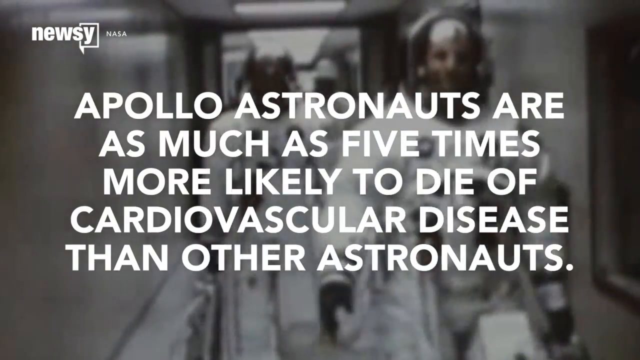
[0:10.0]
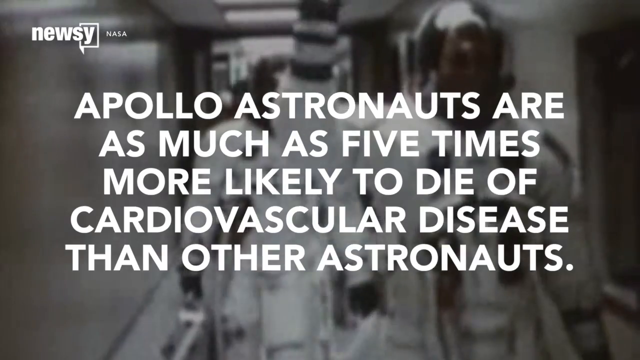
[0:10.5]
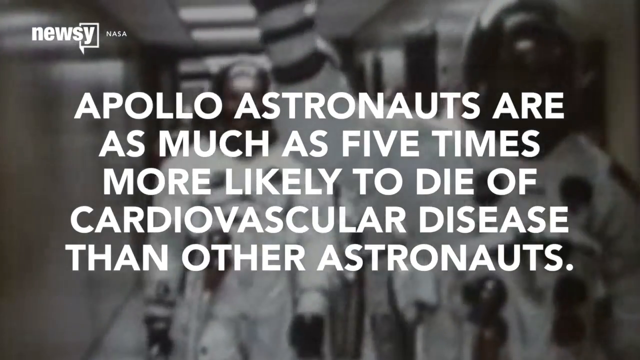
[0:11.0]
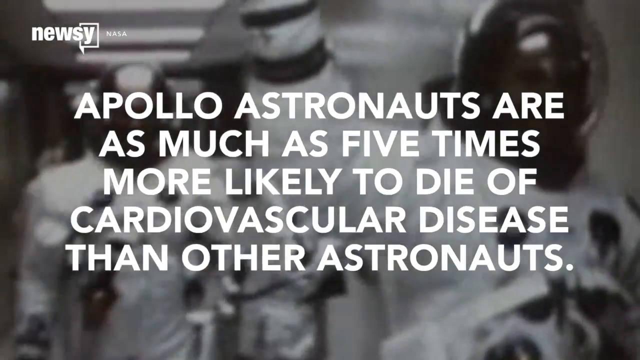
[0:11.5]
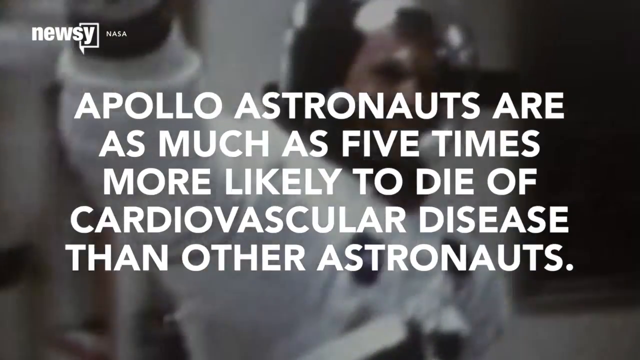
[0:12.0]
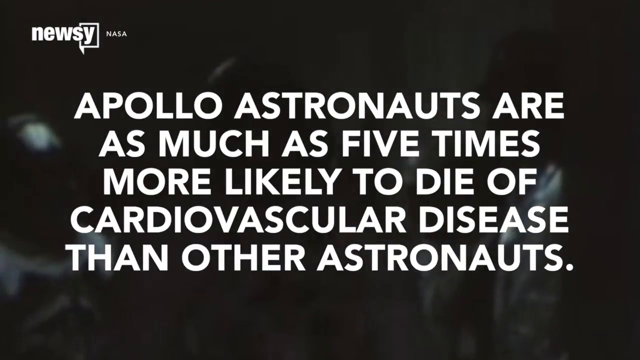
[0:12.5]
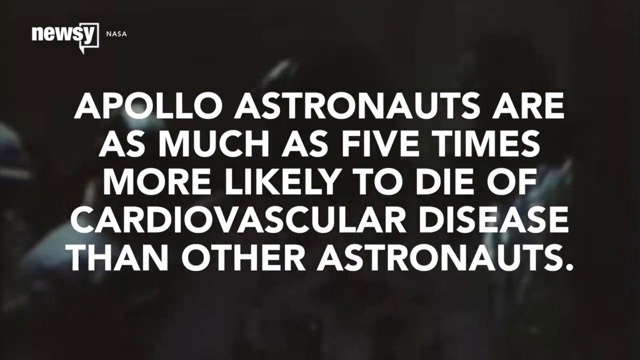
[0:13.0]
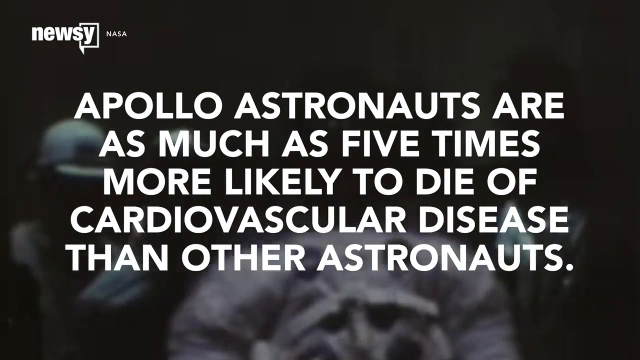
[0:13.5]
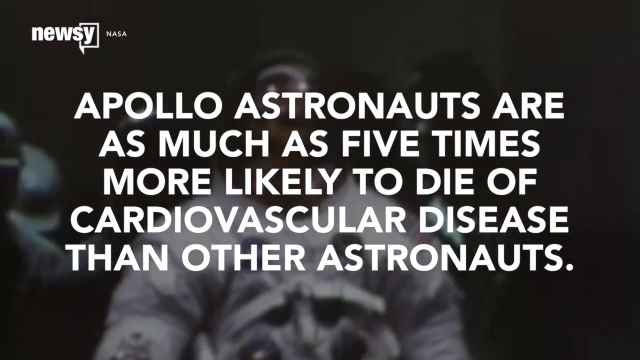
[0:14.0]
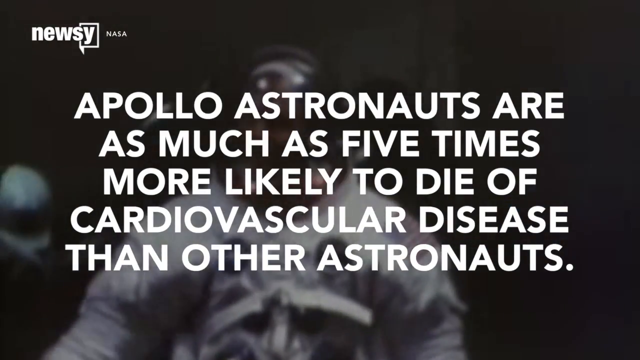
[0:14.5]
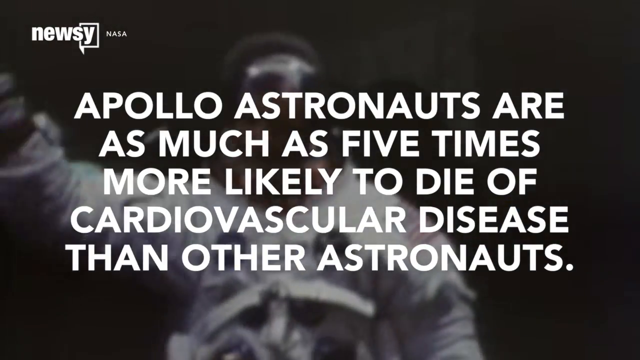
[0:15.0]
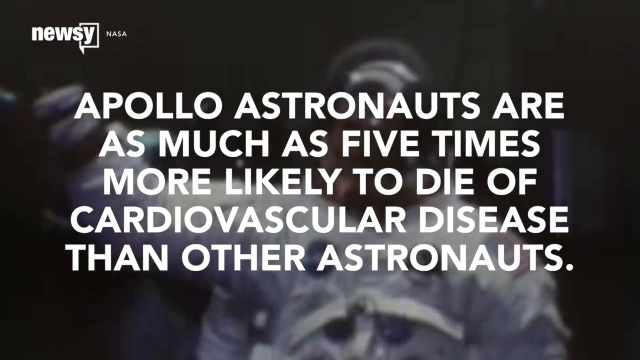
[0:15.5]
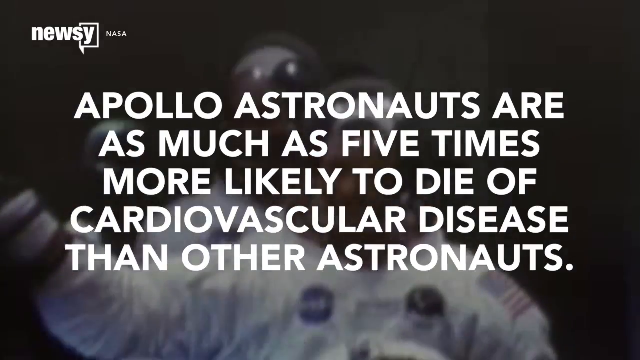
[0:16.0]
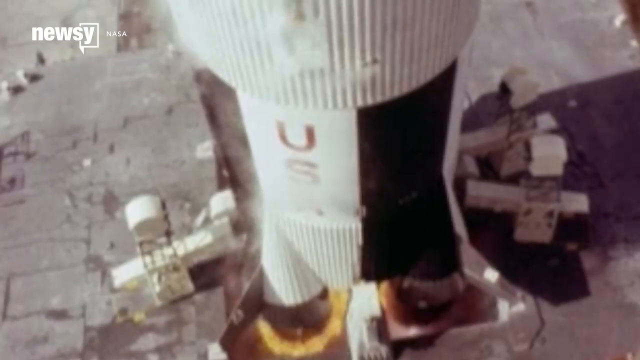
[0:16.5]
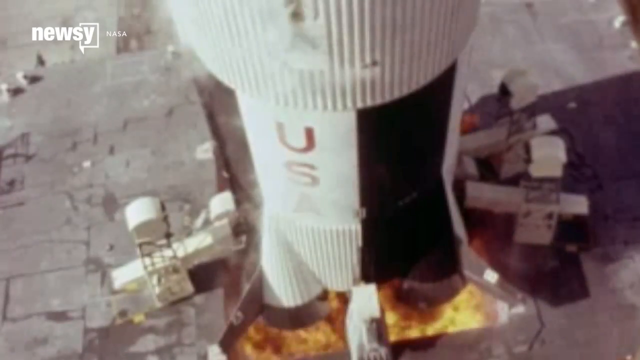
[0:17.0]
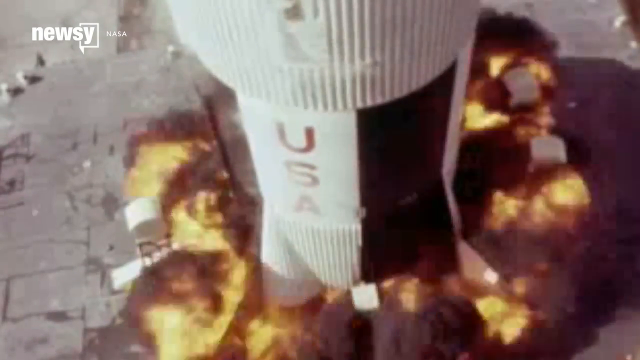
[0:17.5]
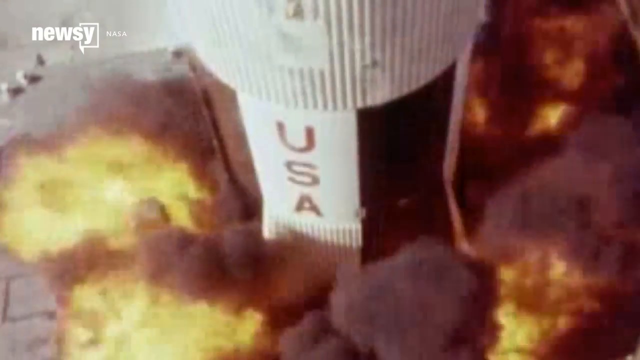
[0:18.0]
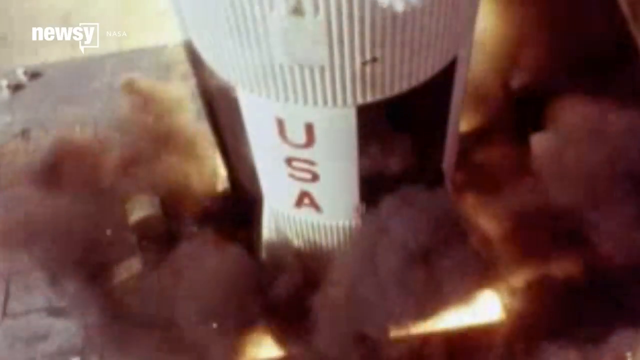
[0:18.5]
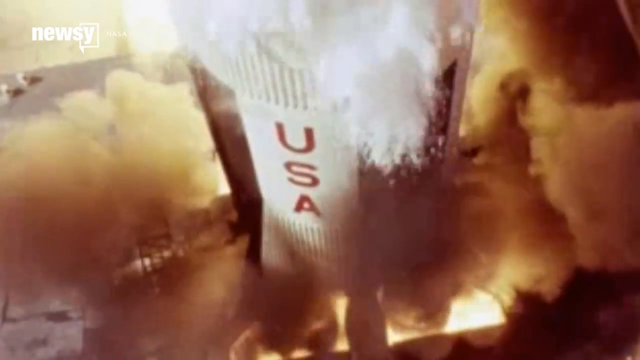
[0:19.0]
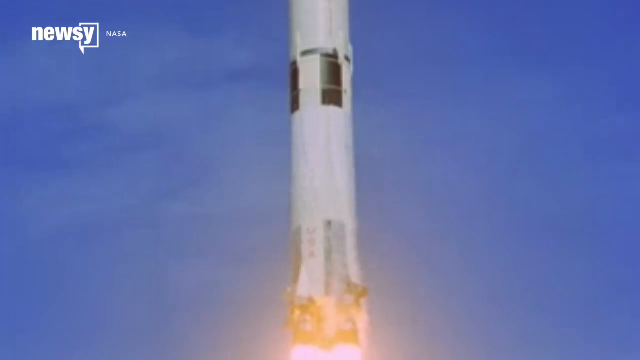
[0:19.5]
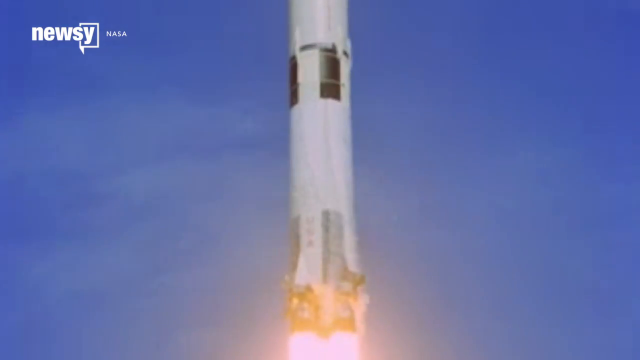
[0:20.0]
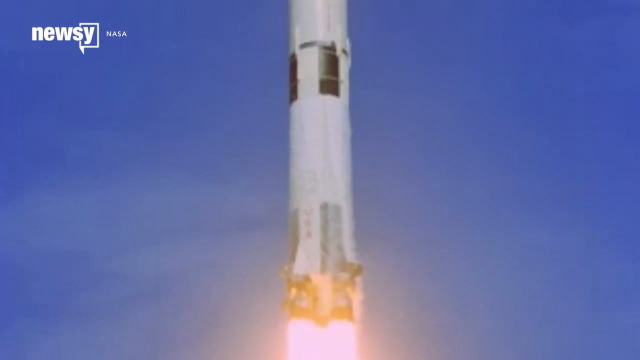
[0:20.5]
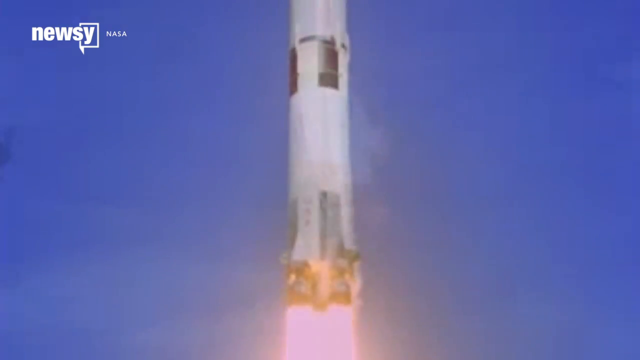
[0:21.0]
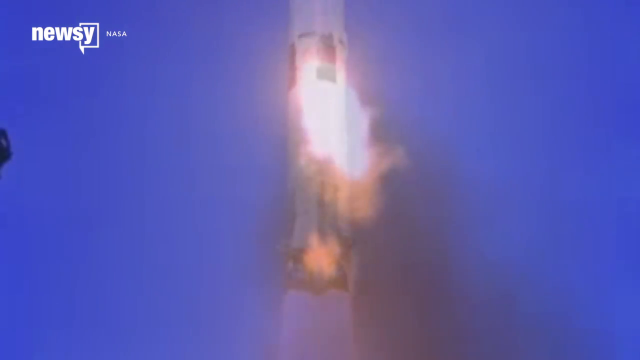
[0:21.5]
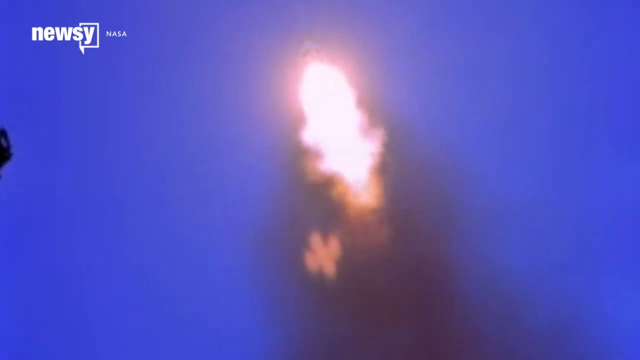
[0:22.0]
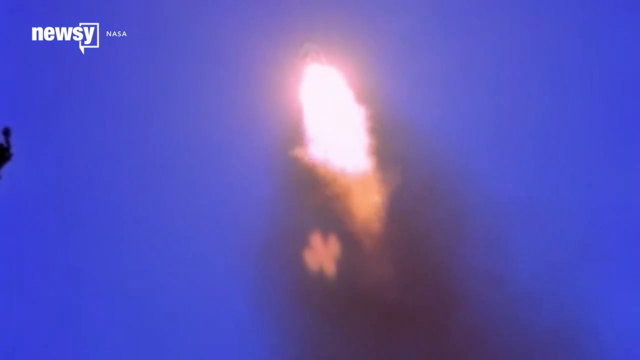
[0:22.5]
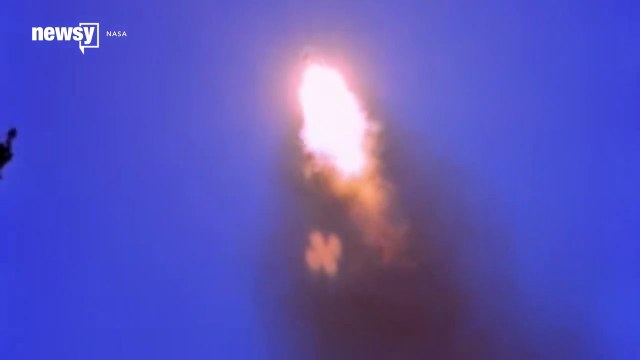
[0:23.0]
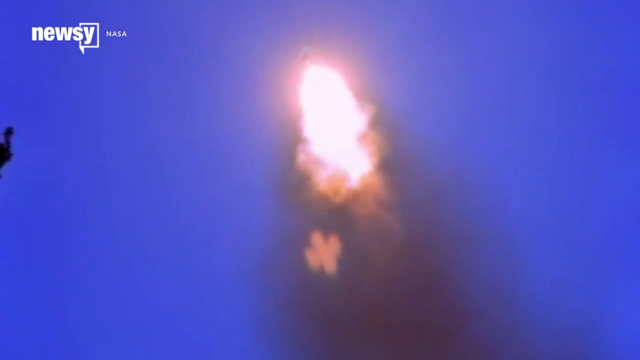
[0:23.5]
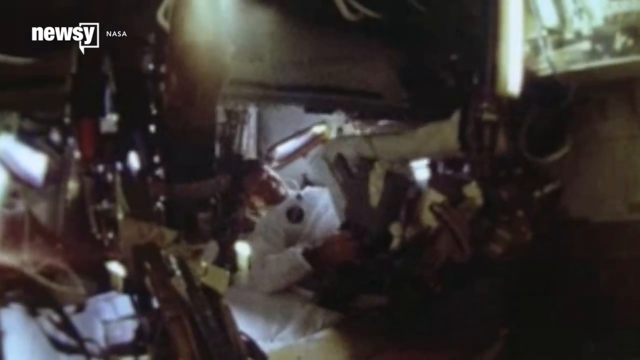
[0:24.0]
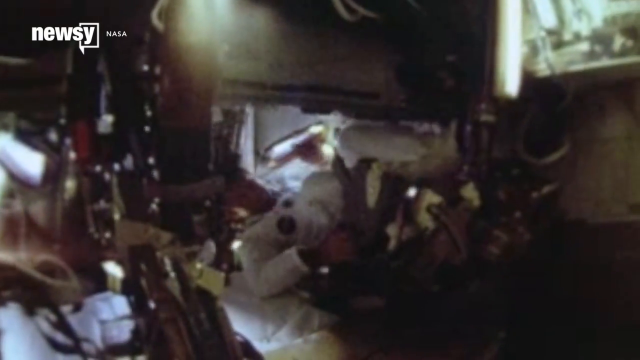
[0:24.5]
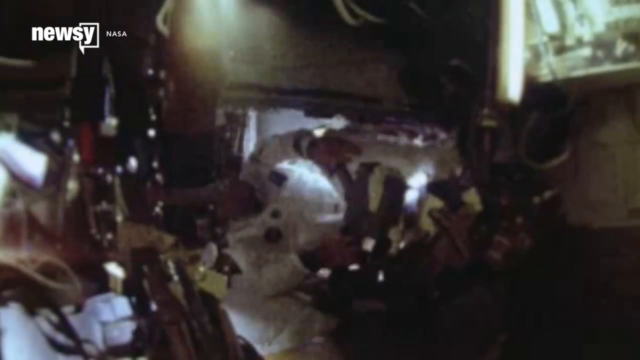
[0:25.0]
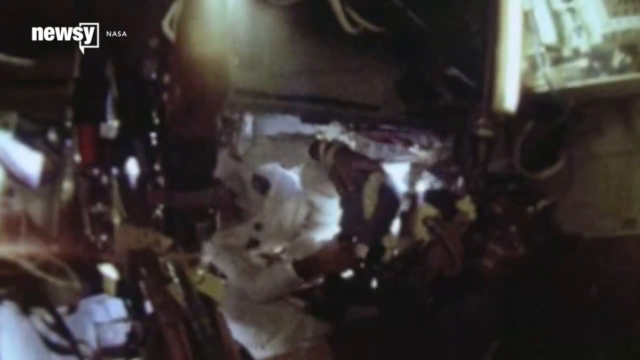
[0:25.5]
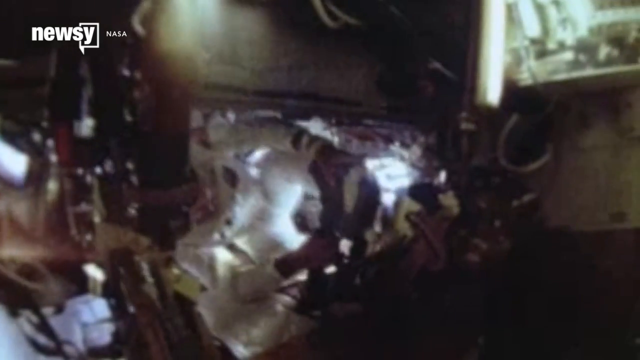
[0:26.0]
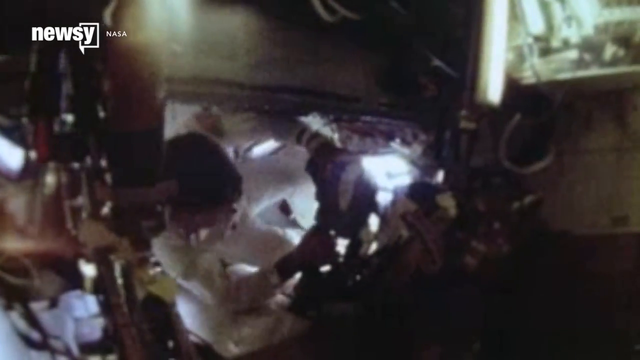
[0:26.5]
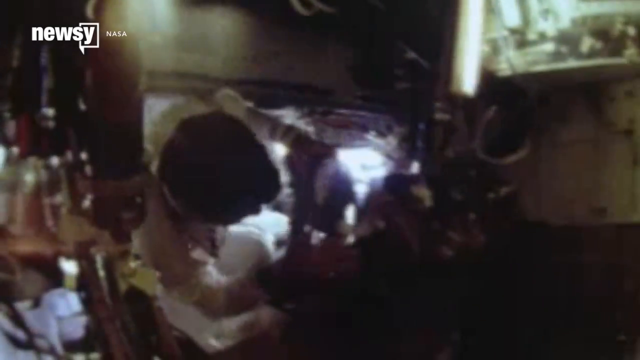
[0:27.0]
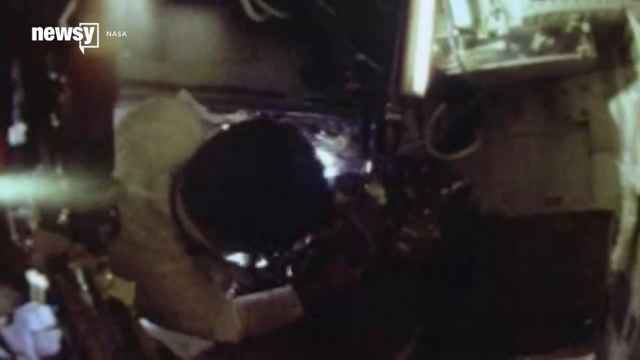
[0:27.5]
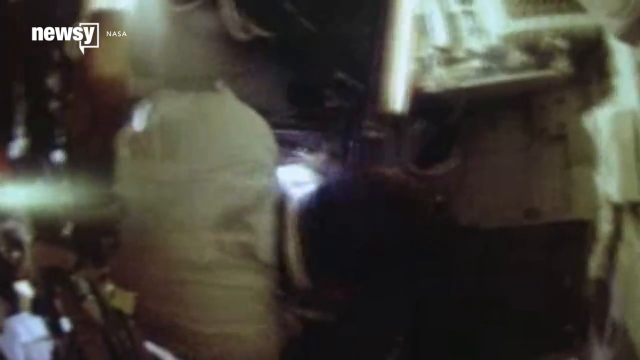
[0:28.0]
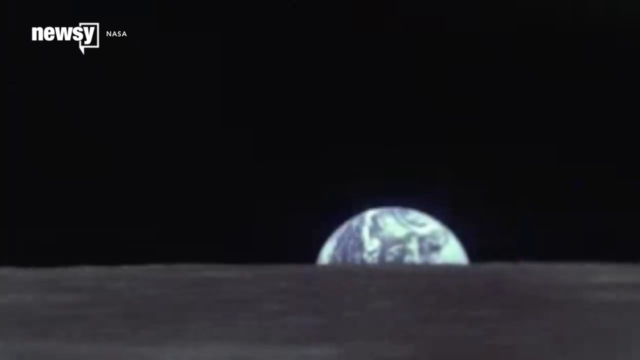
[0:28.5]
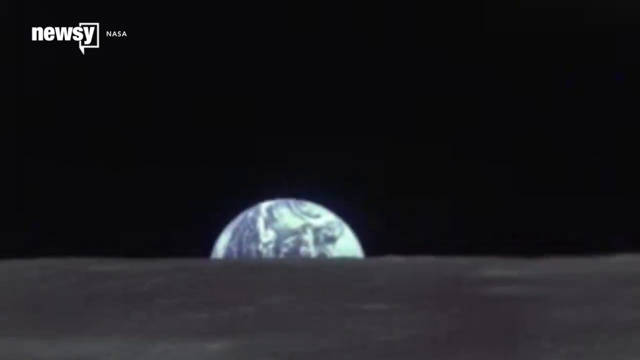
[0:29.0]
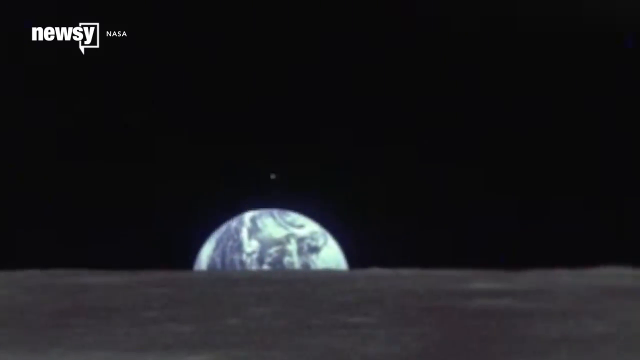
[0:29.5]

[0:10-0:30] In this Newsy video report, large white letters read "Apollo astronauts are as much as five times more likely to die of cardiovascular disease than other astronauts" while astronauts walk down a hallway carrying little silver suitcases; it looks like they may have hoses. A USA rocket ship then launches into the air. It fires up, fire is visible as it goes up, and more fire appears once it is in the air. The astronauts come out of the little cockpit they have been riding in. They are probably on the moon, with the Earth in the distance, and it looks like they are about to step out onto the moon's surface. How many there are cannot be seen. Before they take off, they are seen waving in the air.